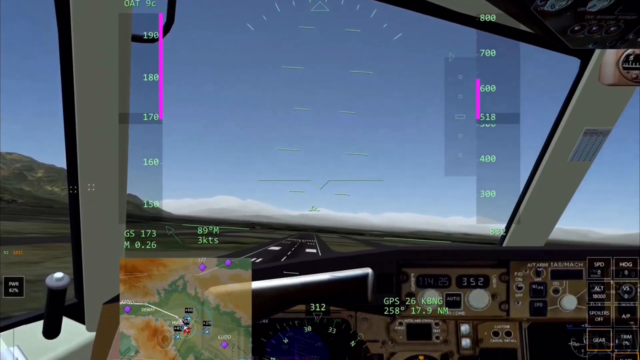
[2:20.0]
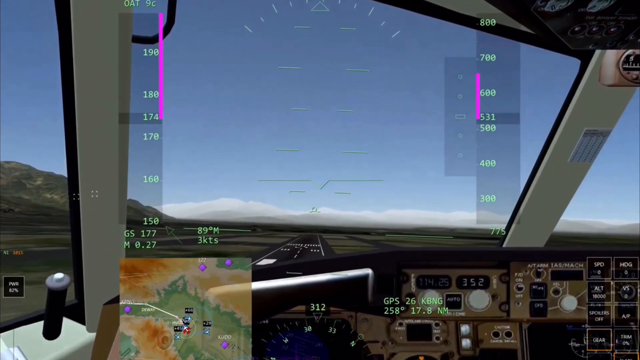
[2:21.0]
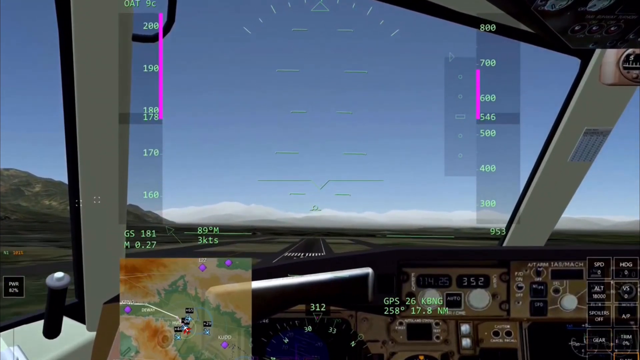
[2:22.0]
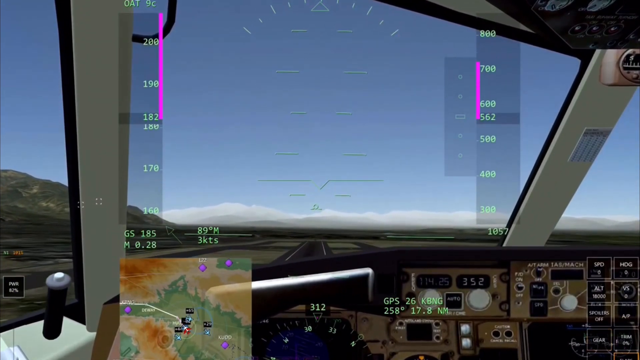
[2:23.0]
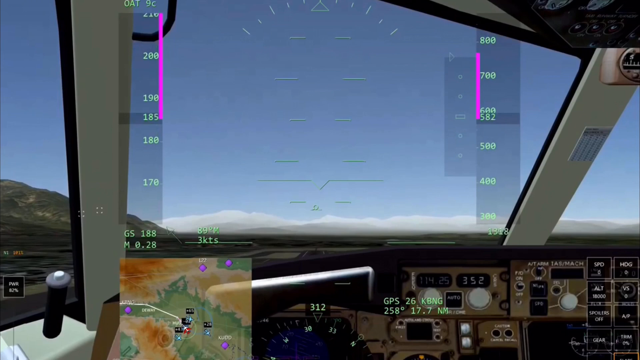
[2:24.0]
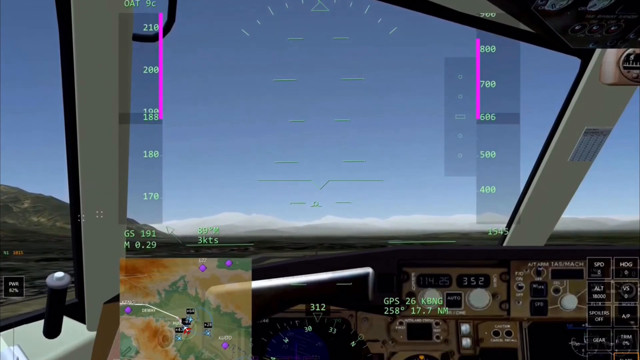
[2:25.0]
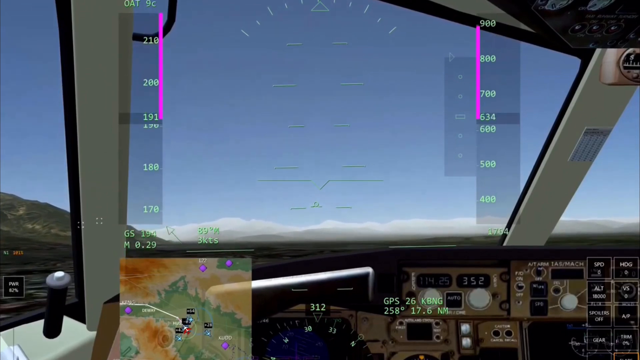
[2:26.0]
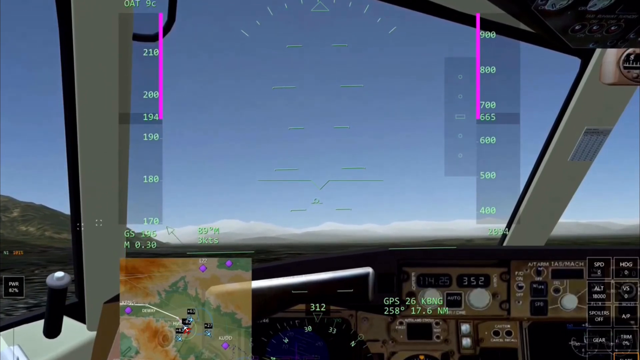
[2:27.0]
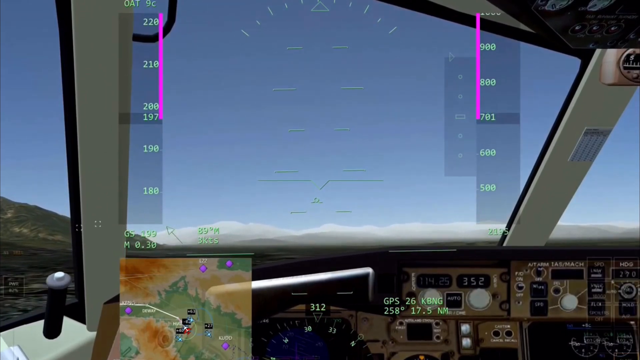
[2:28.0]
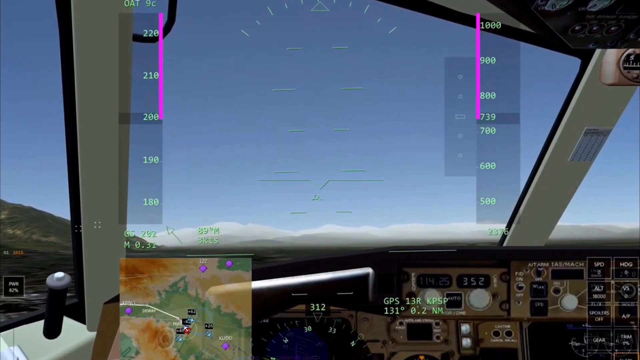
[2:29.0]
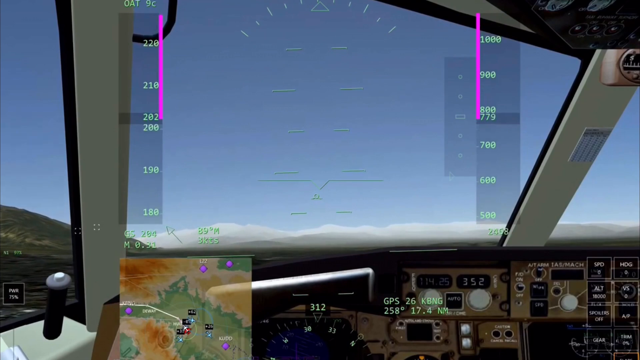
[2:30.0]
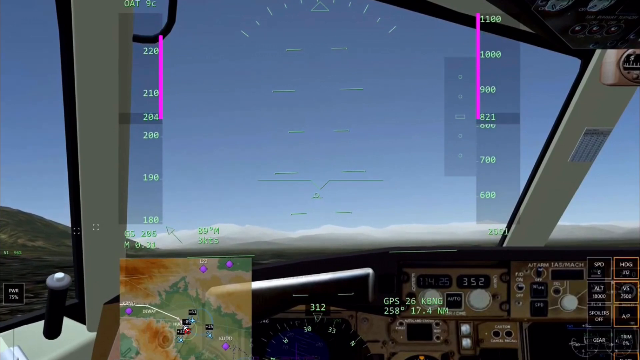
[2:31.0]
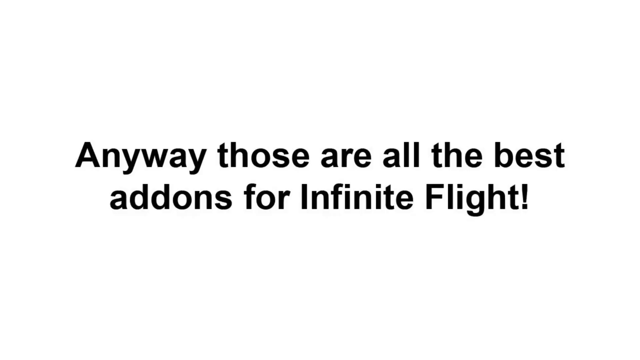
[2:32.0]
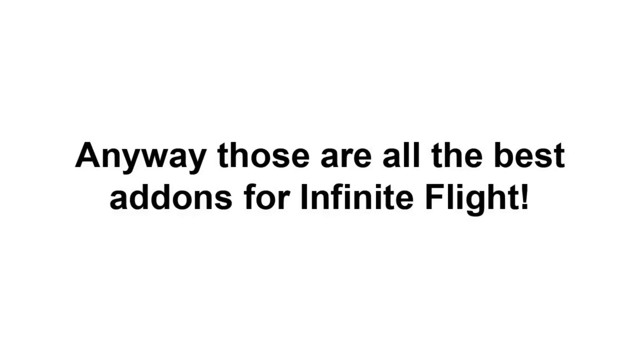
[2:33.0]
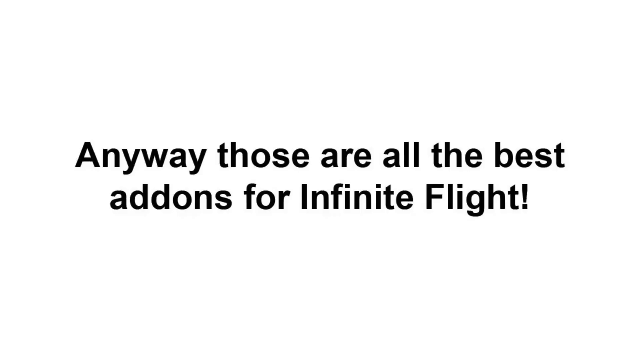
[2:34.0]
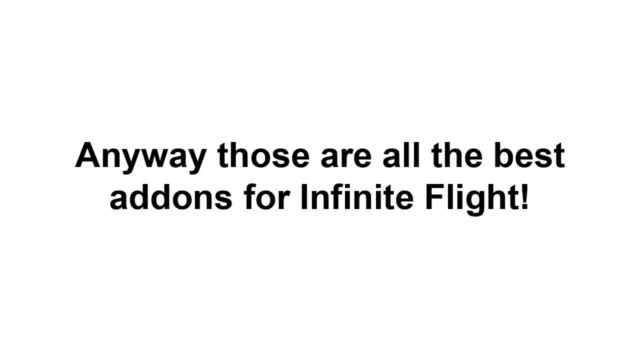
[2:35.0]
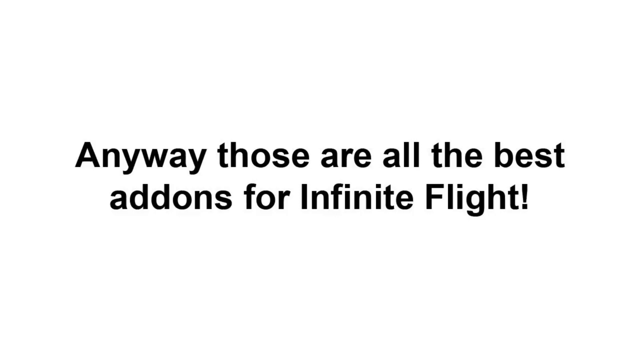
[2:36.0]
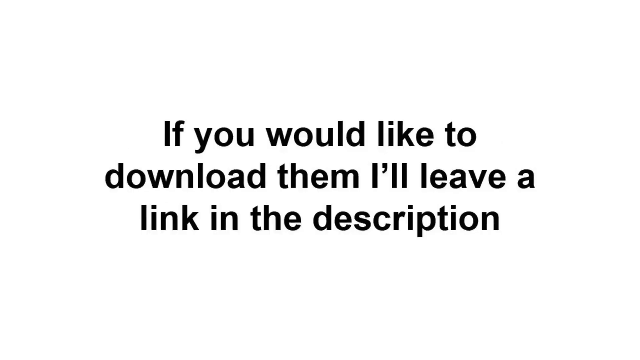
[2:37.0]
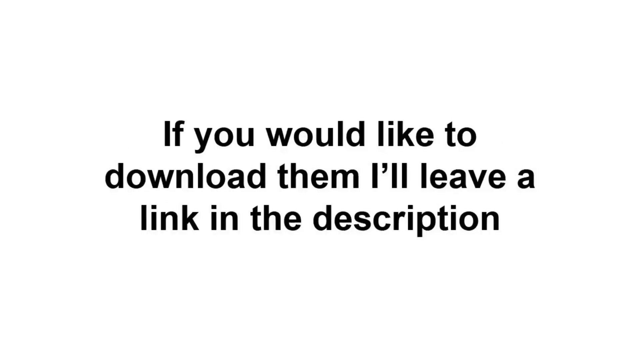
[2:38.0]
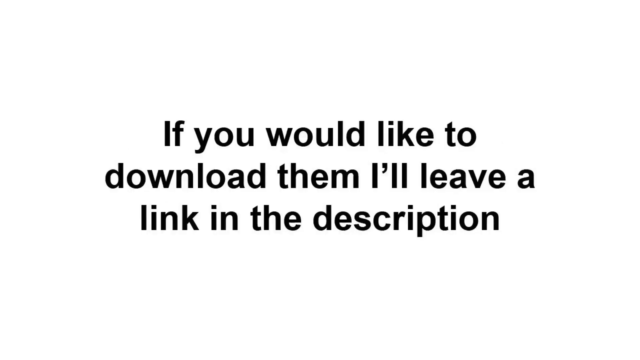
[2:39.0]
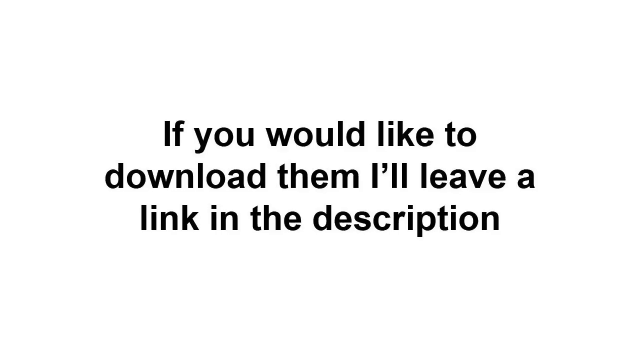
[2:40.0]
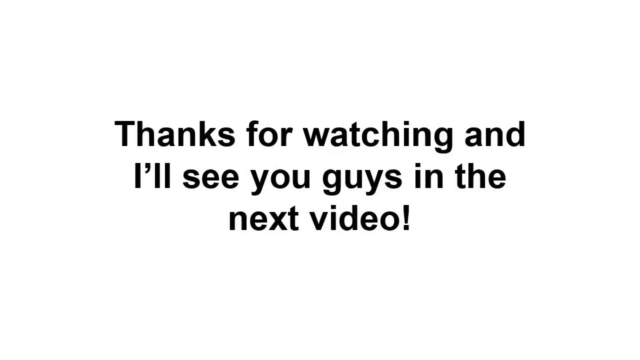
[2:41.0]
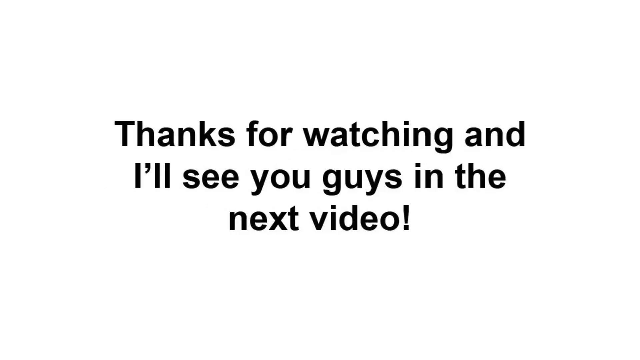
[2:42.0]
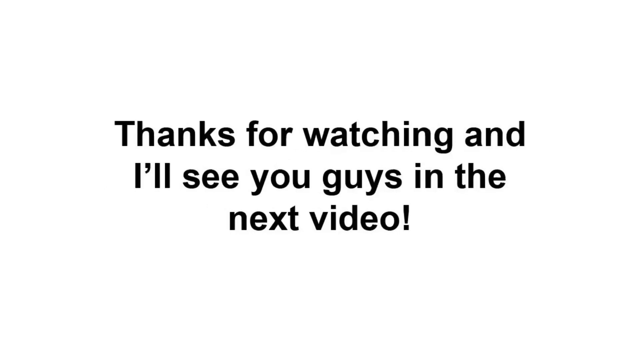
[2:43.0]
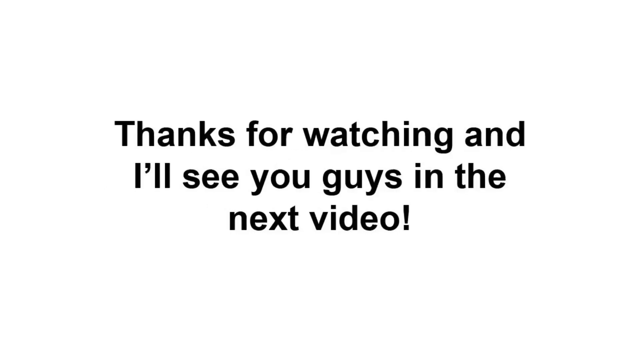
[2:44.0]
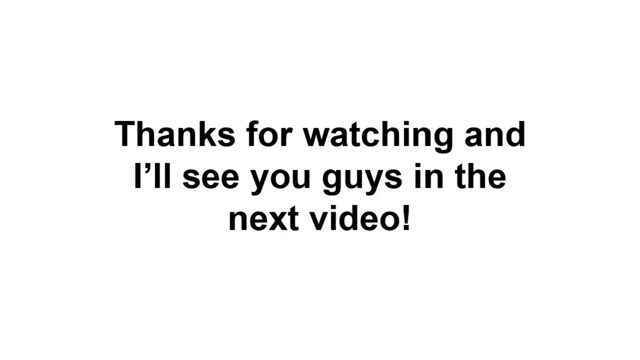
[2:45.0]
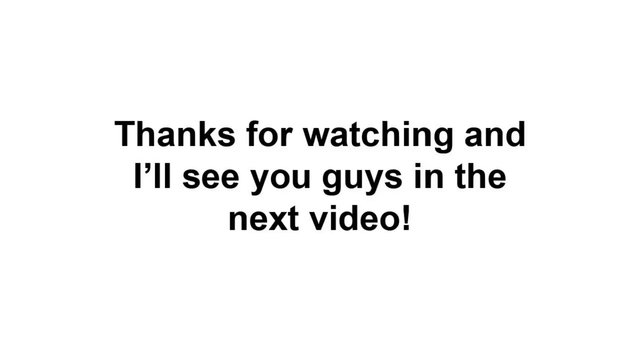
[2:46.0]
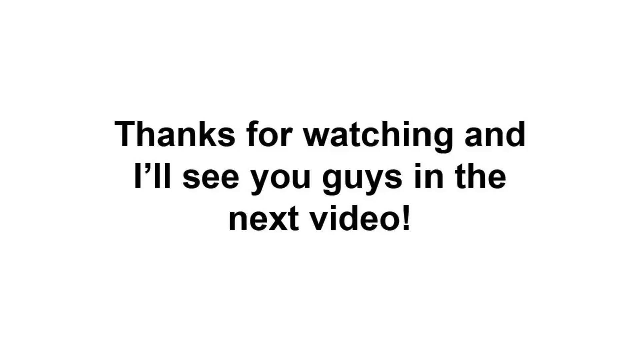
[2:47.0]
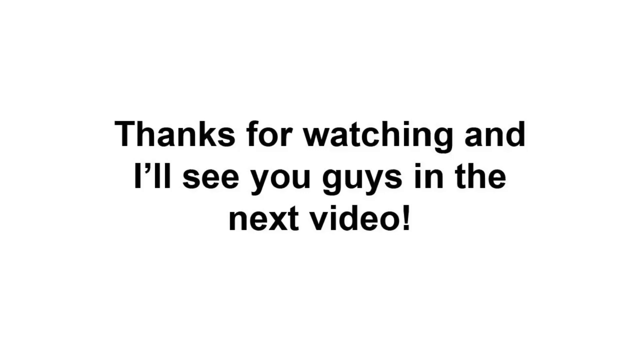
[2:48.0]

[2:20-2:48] A jet airliner has just taken off, and through the cockpit window the runway gets smaller and disappears underneath the aircraft. Text on the screen then reads "anyway, those are all the best add-ons for Infinite Flight," followed by "if you would like to download them, I'll leave a link in the description" and finally "thanks for watching and I'll see you guys in the next video."